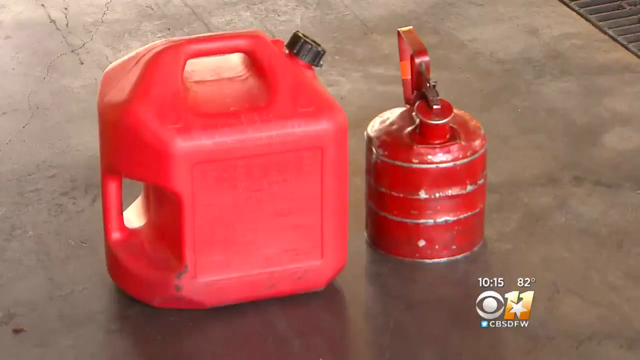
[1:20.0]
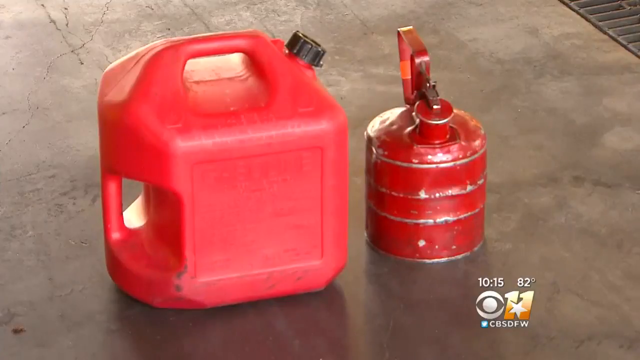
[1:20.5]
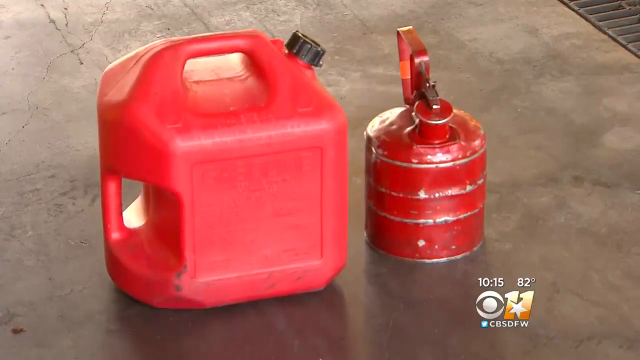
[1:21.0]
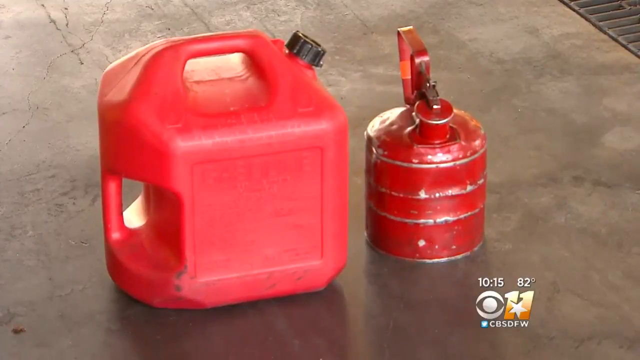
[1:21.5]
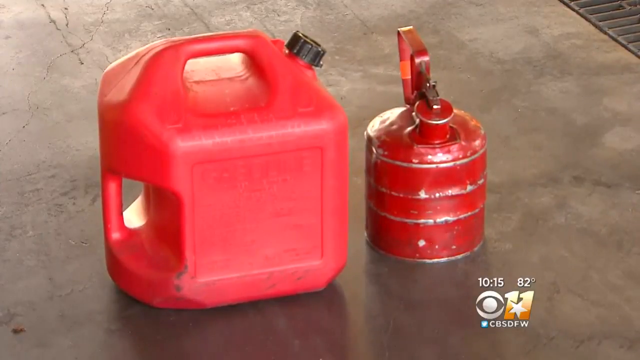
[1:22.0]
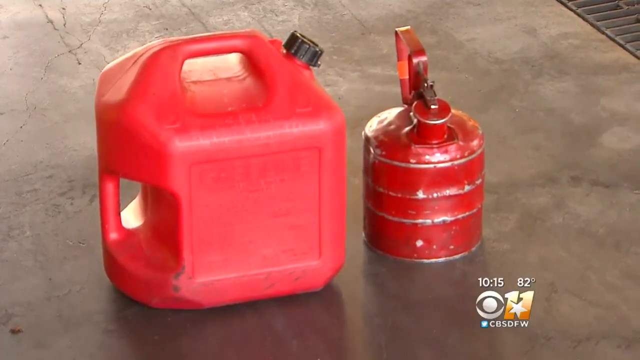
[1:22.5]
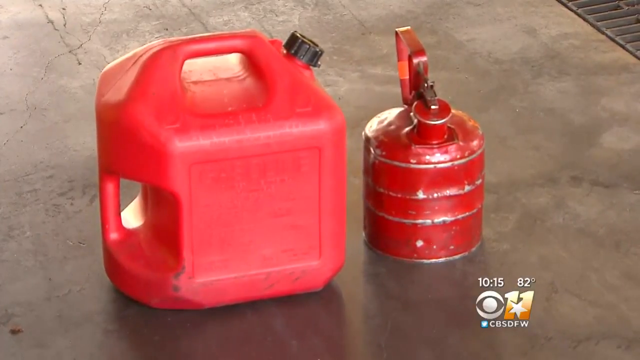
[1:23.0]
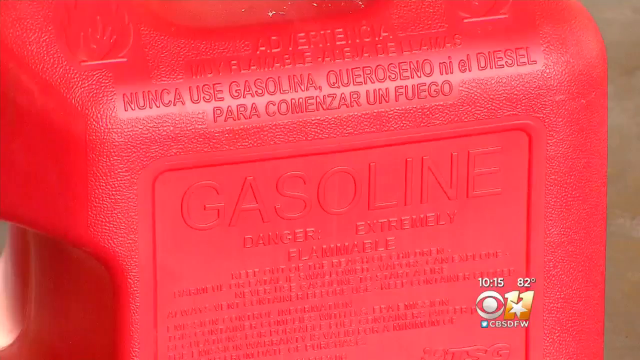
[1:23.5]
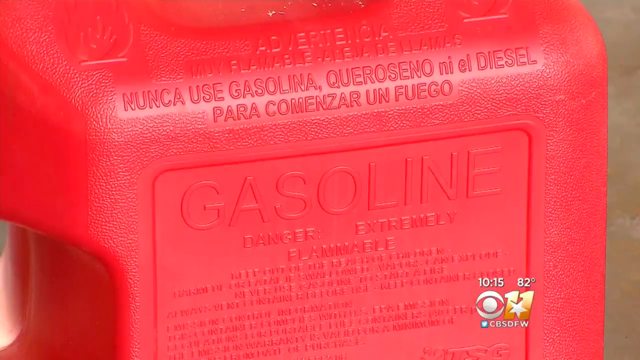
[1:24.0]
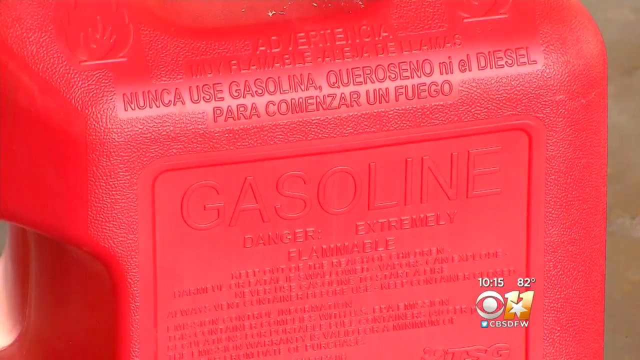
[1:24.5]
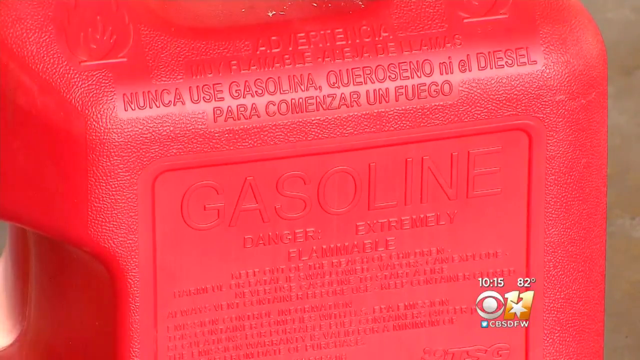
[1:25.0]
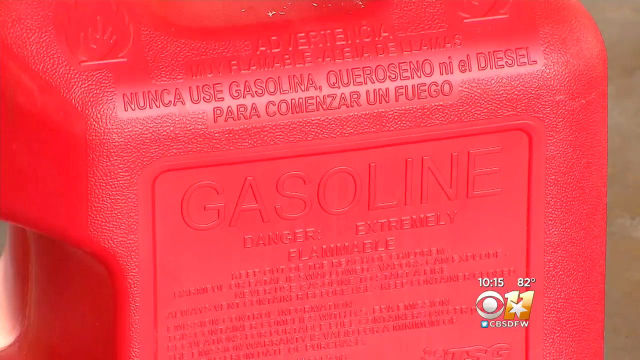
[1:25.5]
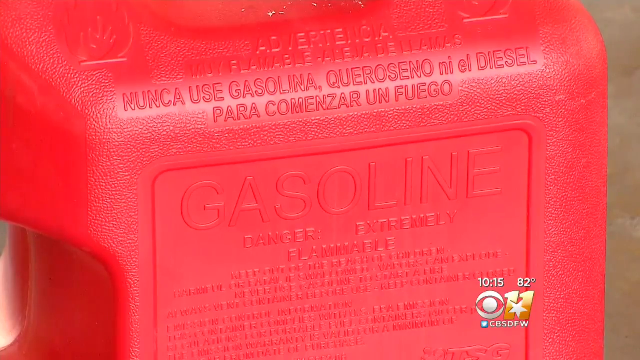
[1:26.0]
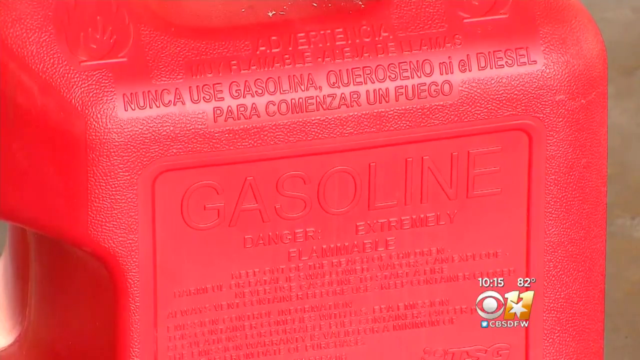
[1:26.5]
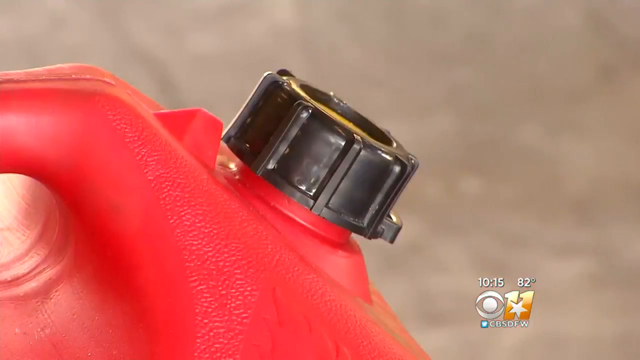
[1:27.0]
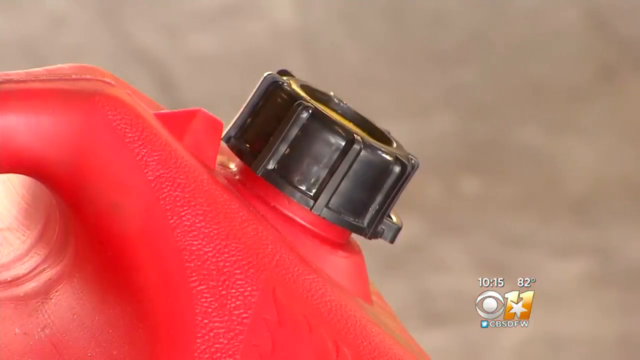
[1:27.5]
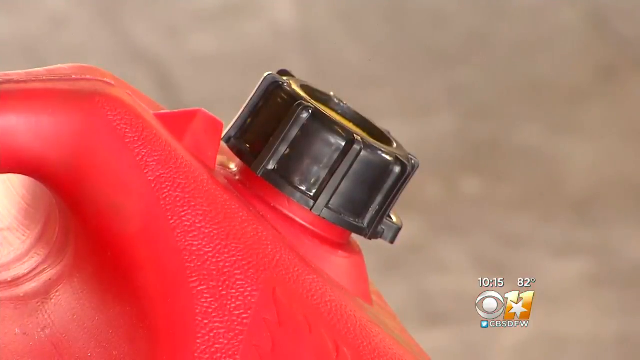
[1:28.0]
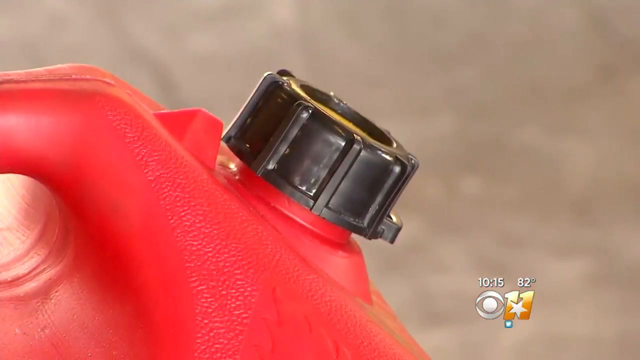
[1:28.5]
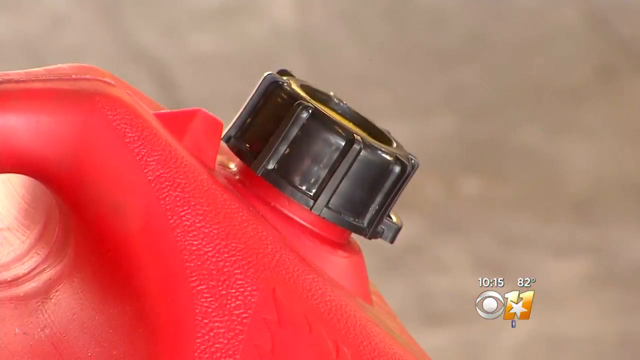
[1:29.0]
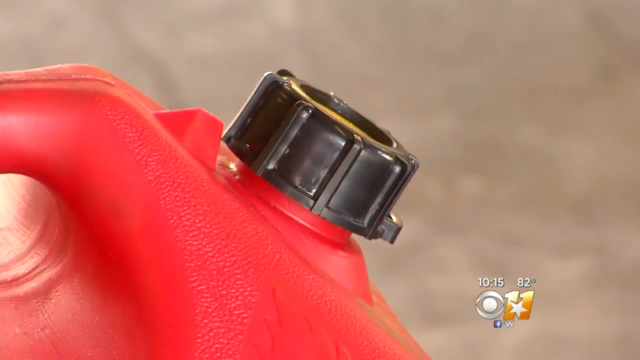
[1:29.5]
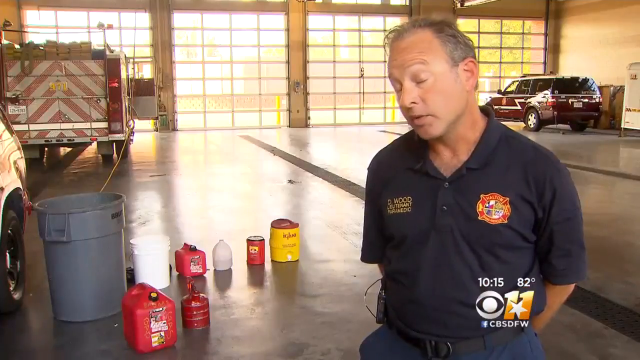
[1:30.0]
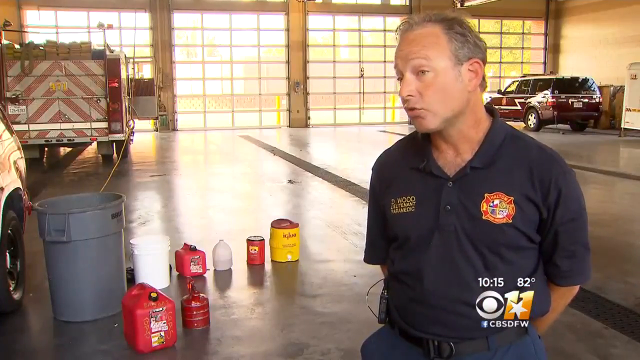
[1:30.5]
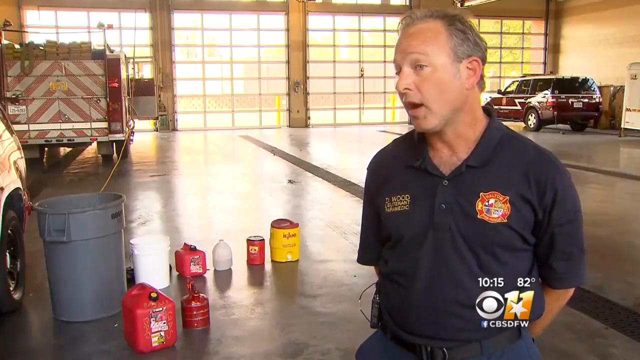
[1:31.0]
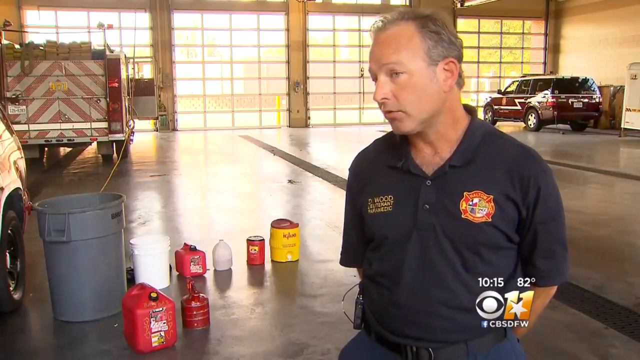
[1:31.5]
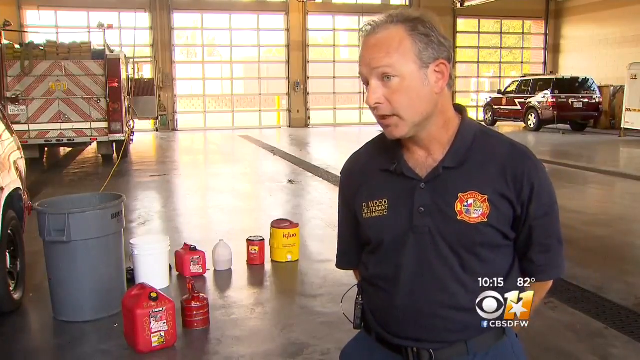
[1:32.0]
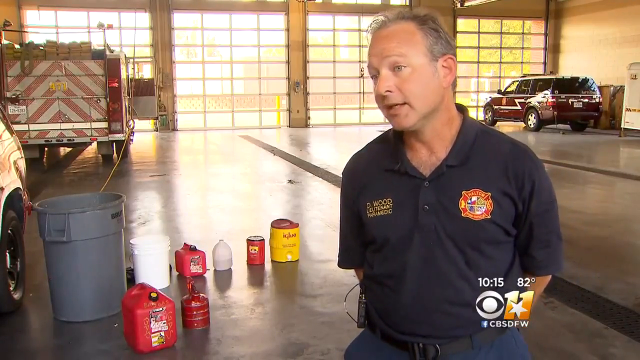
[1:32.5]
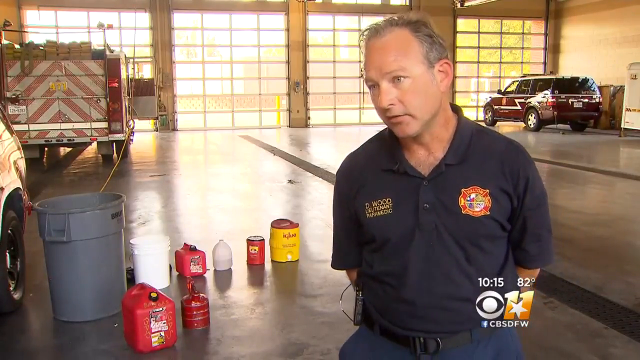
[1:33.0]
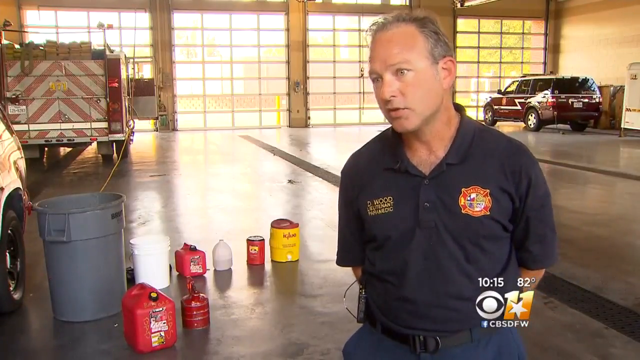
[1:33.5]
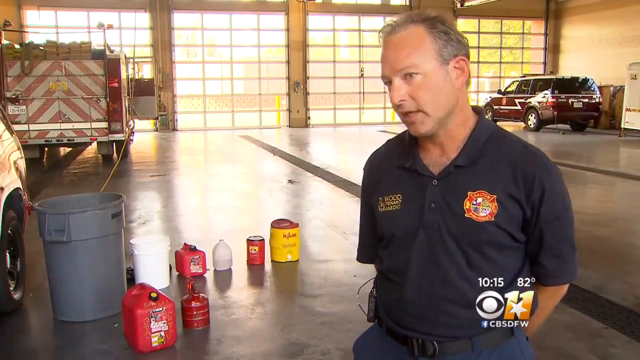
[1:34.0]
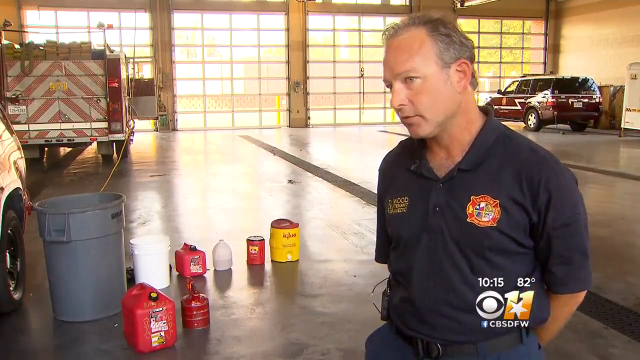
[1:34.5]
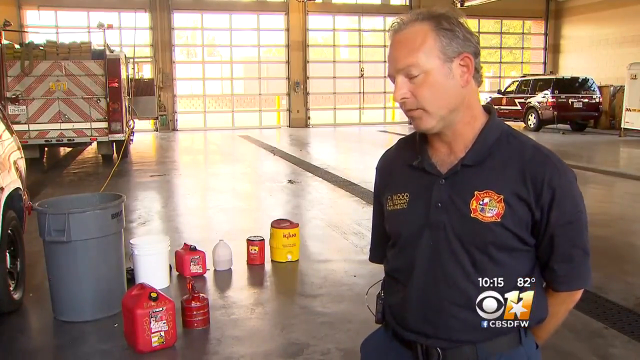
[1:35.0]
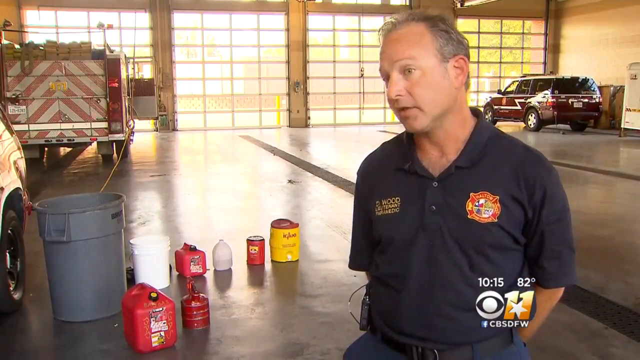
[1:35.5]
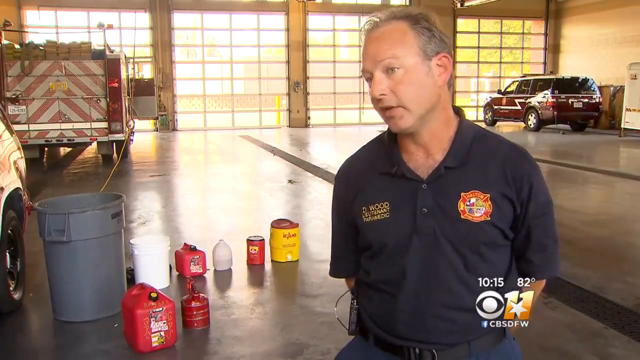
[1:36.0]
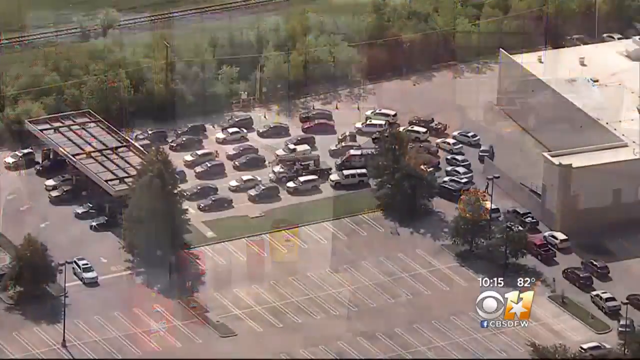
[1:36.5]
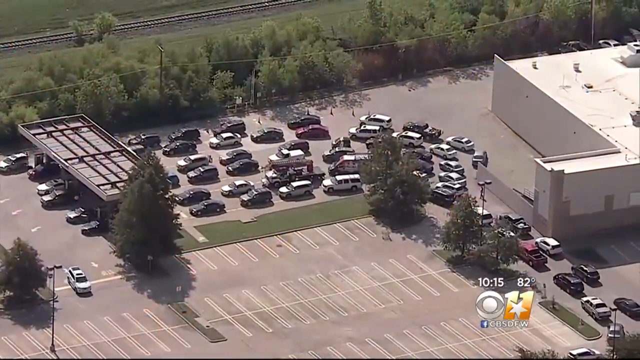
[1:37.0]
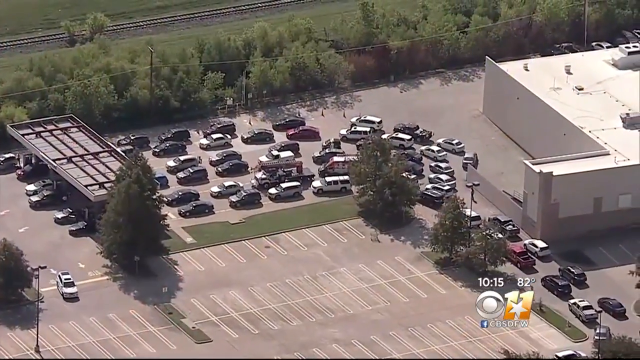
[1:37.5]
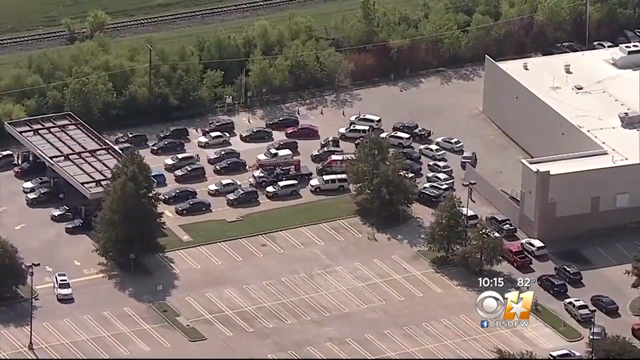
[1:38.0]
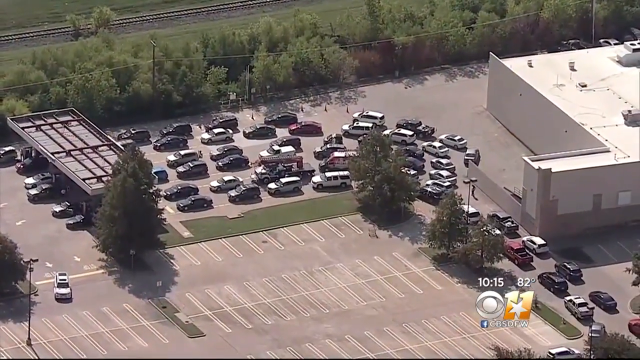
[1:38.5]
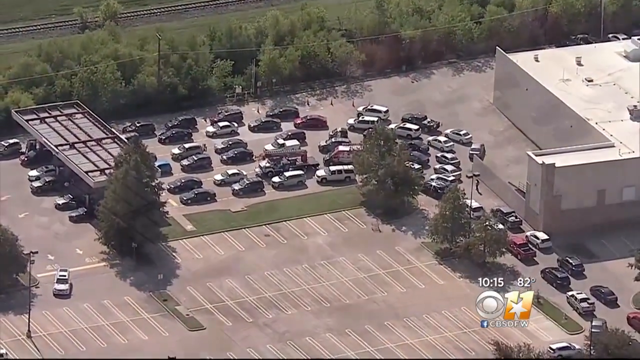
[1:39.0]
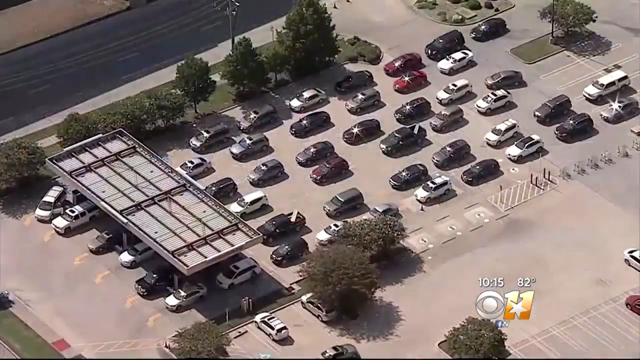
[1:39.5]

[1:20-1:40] A red metal gasoline canister is sitting on the ground. A CBS 11 logo is in the bottom right-hand corner of the screen, with the time and temperature above it. A zoomed-in shot of the canister shows the fine print written on it, followed by a zoomed-in image of the black closing lid on the red canister. Next, a middle-aged man with grayish dark hair, wearing a fire department polo shirt, speaks in front of the camera with his hands behind his back. Behind him on the ground are many plastic containers, such as gas canisters, a trash can and other things used to store gas. An aerial view then shows a lot of traffic, with cars waiting to get gas at a gas station.